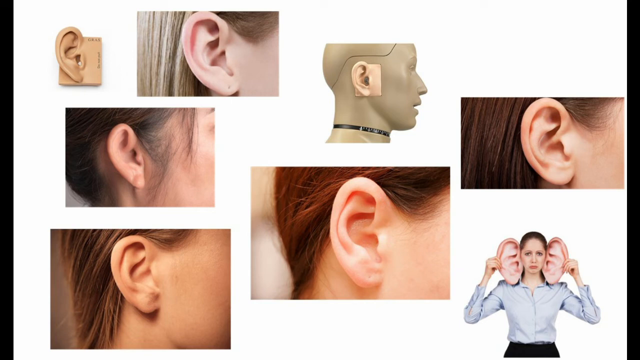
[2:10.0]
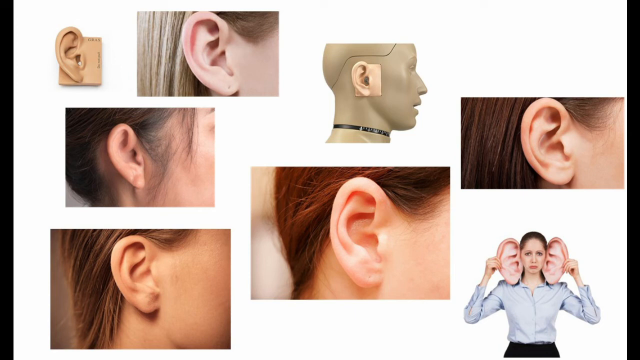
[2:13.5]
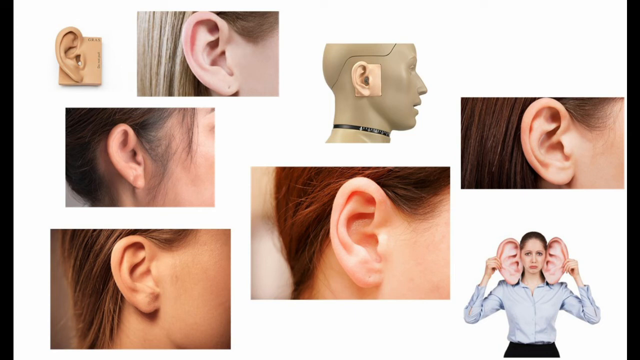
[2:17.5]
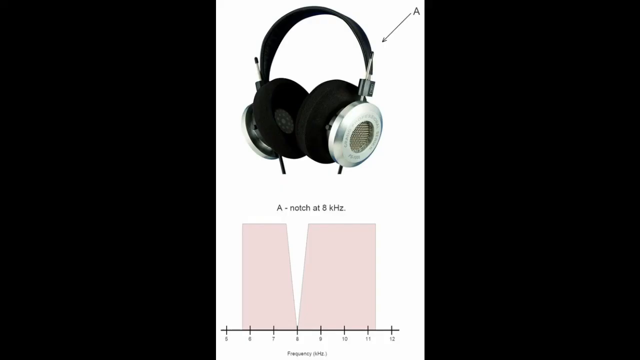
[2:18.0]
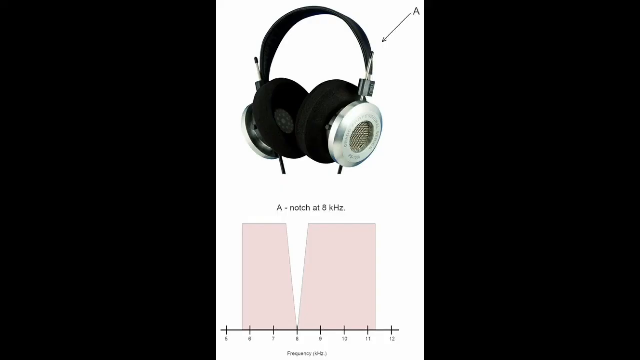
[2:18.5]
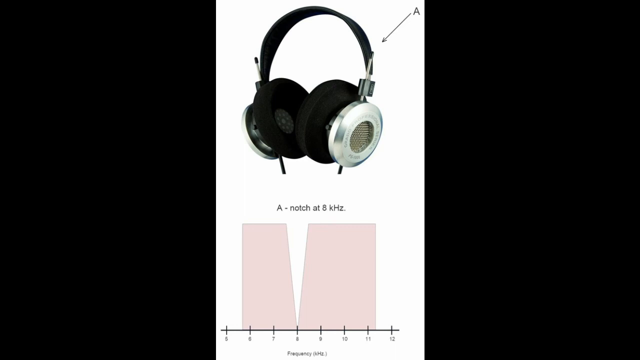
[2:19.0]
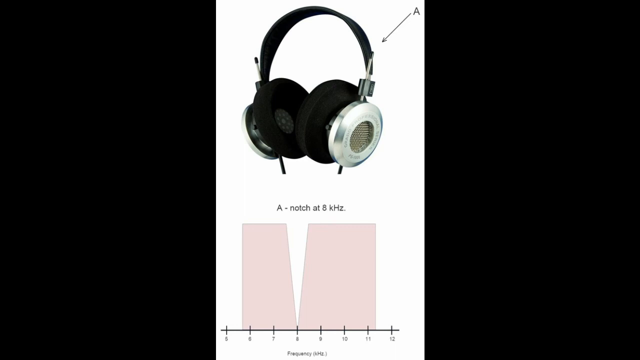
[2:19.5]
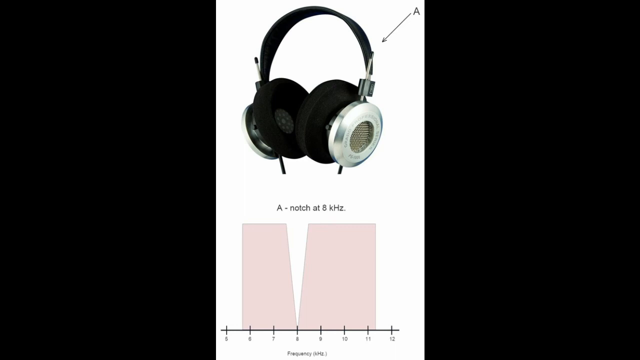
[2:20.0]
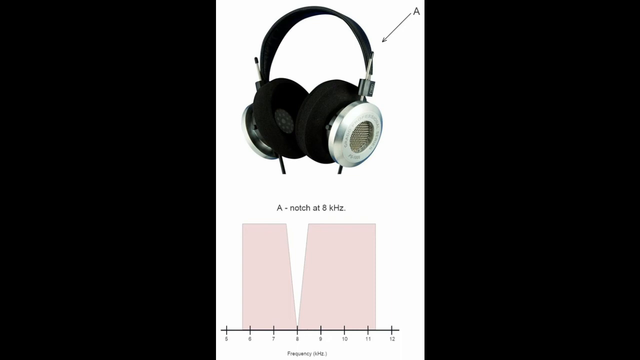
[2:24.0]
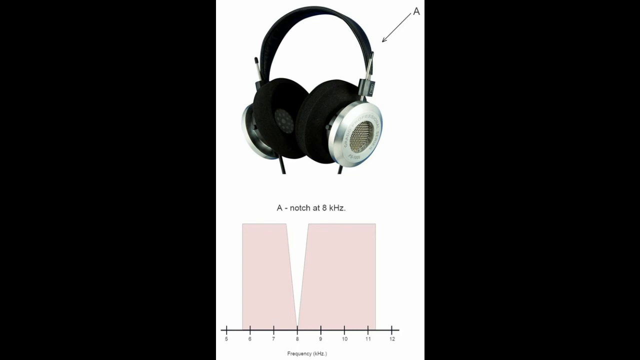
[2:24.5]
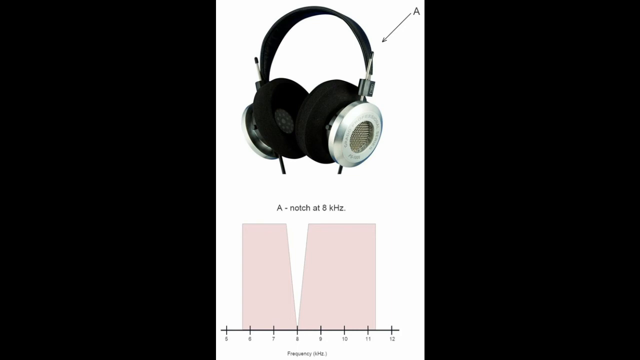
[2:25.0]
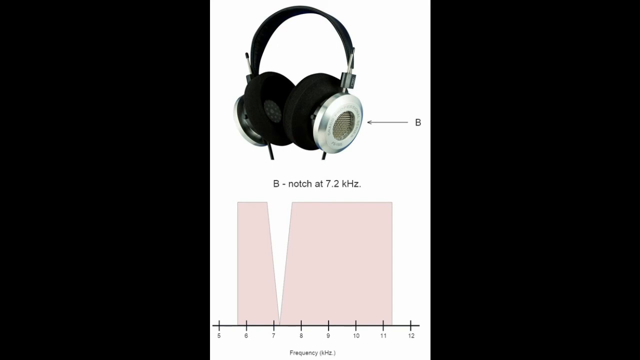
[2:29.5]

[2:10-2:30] A white background shows five or six different images of different women's ears. There is also a plastic mannequin with an ear attached to its head, and an individual single plastic ear in the top left corner of the screen. A woman who is pouting tugs at very large fleshy ears; she wears a blue collared dress shirt and dark colored pants. The video then goes to another screen with a white background, where a black arrow labeled "A" points to a pair of black and silver headphones. Salmon pink boxes are labeled "A notched at 8KHZ," with a black line that has other black lines on it, labeled 5, 6, 7, 8, 9, 10, 11, 12. A black screen follows before another screen of the headphones appears, labeled with a black arrow and "7.2KHZ."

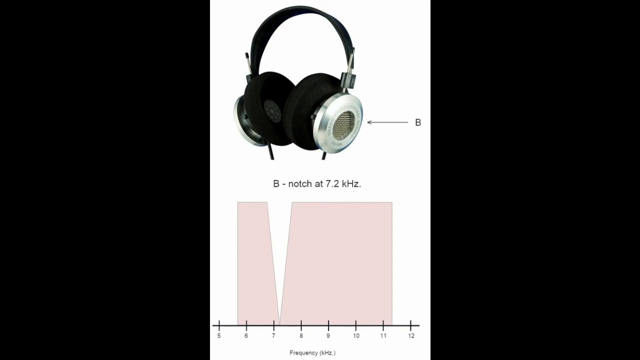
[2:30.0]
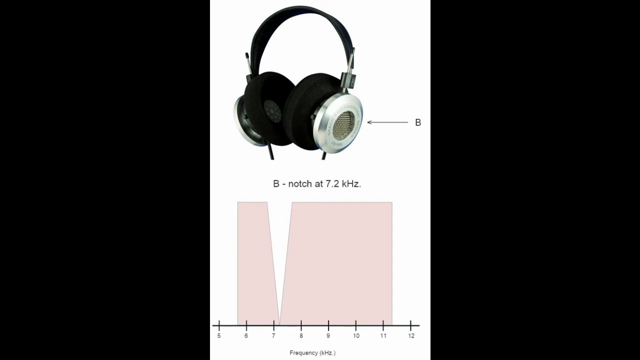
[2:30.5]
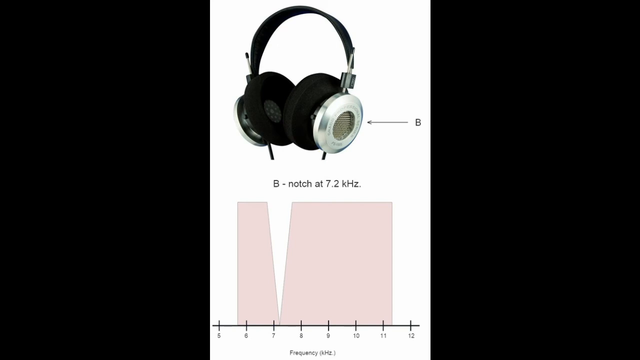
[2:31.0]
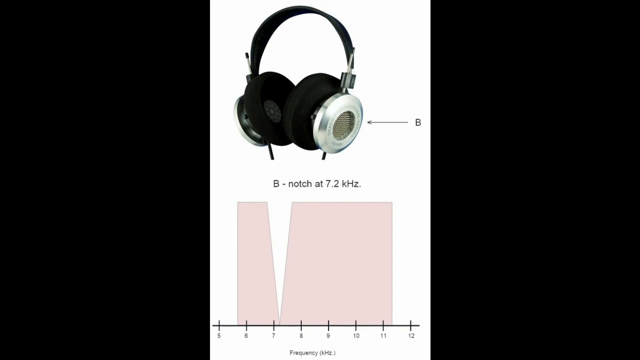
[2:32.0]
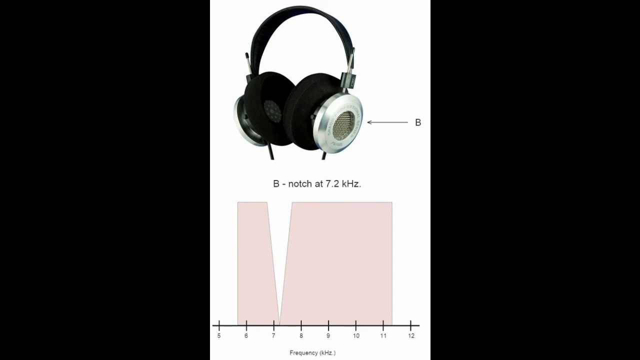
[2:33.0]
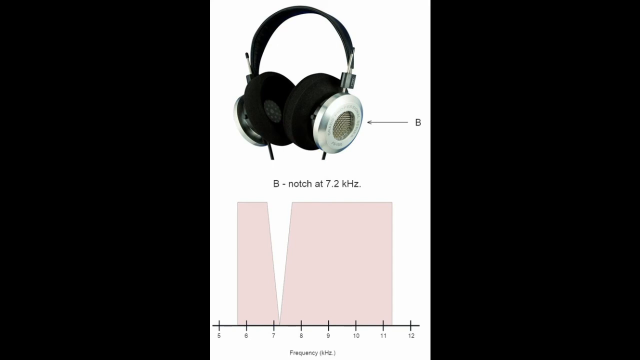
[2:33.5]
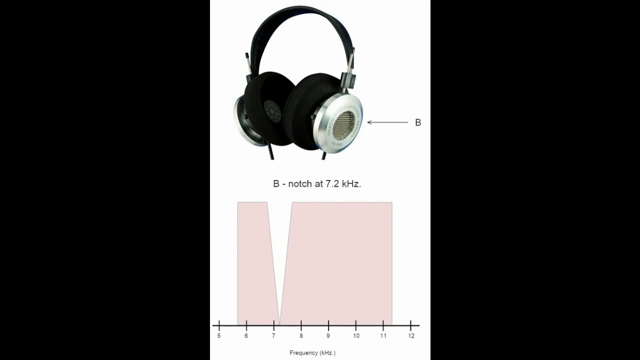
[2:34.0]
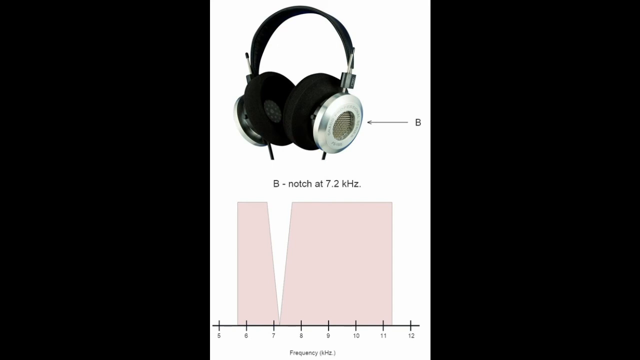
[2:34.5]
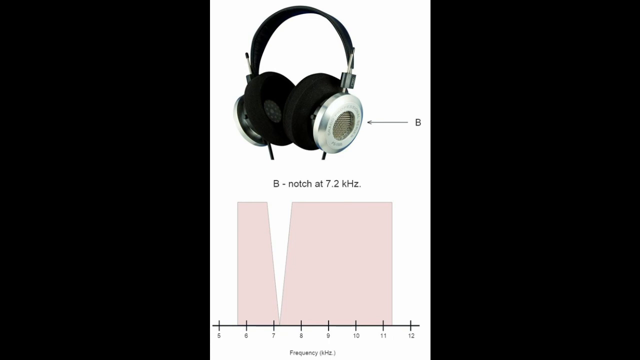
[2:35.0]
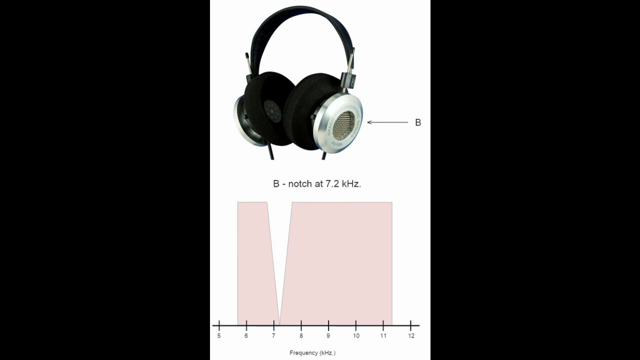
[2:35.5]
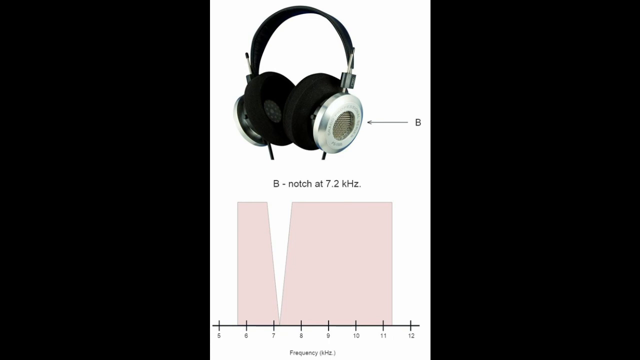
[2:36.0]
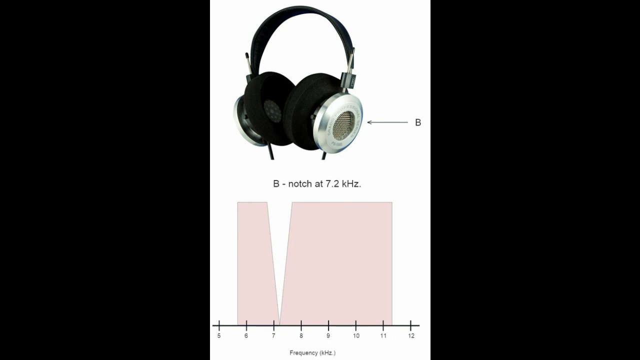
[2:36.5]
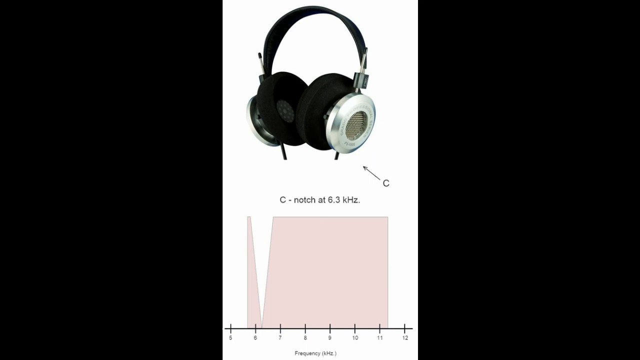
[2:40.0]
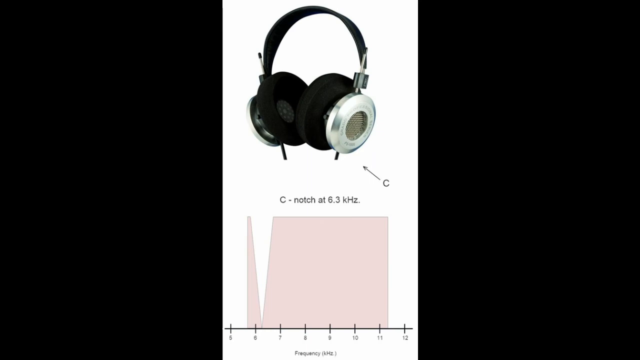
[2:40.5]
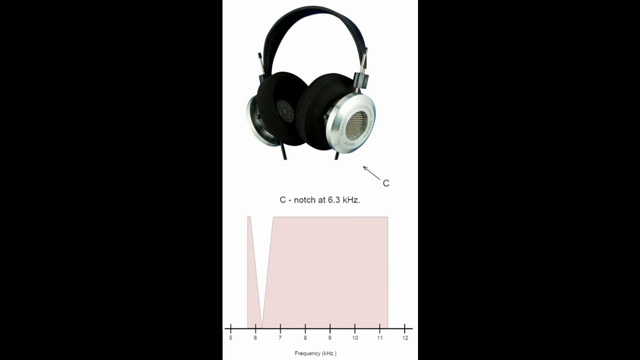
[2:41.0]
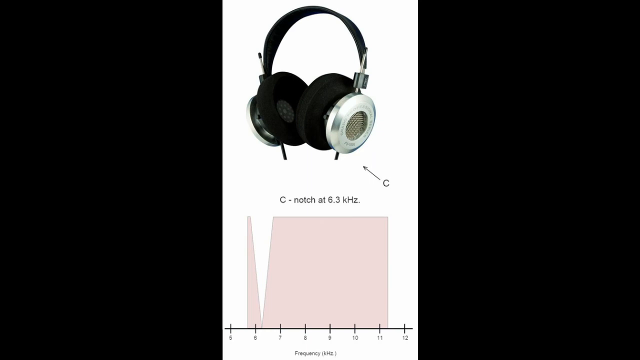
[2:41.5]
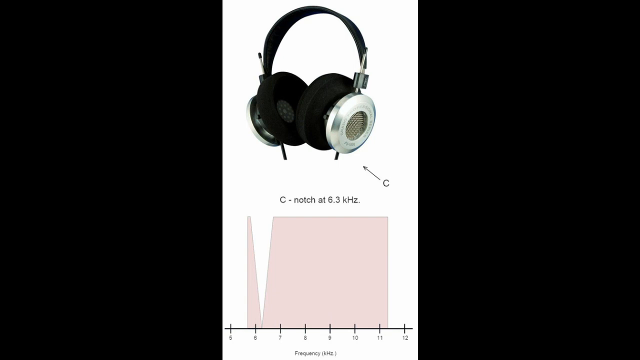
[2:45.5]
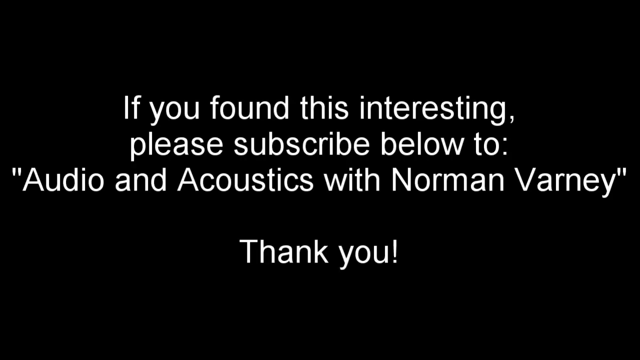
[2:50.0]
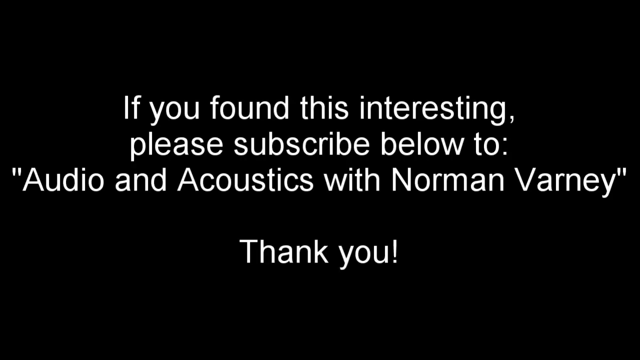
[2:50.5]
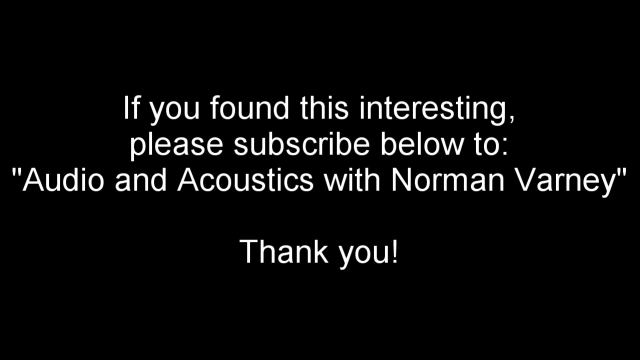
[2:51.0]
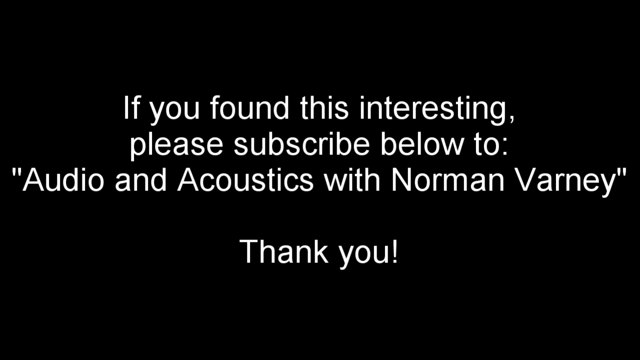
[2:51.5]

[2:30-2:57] A black background shows a white box with a pair of black and silver headphones, with a black arrow labeled "B" pointing to them. Black text under it reads "B notch at 7.2 KHZ," and there is a salmon pink shape at the bottom with a black line that has additional black lines through it, labeled five, six, seven, eight, nine, ten. The video then goes to a black screen for a period of time, followed by another picture with a white background and a pair of black and silver headphones labeled with a black arrow. Text reads "C notch at 6.3 KHZ," and there is a salmon pink shape with a black line with line dashes, labeled five through twelve. Finally, a black background shows white text reading "if you found this interesting please subscribe below to Audio and Acoustics with Norman Varney. Thank you."